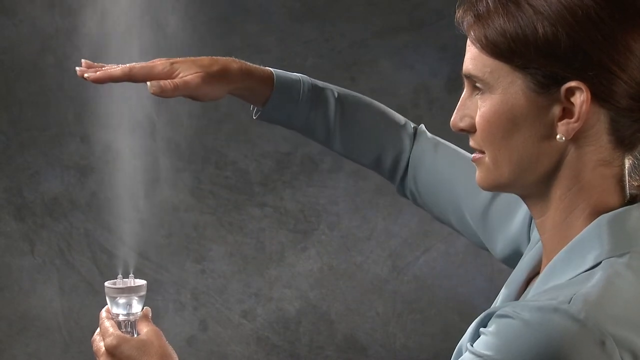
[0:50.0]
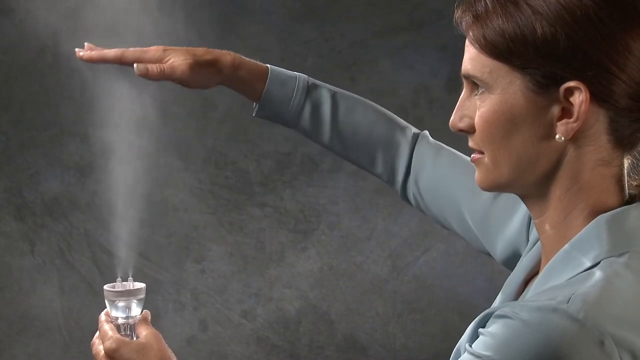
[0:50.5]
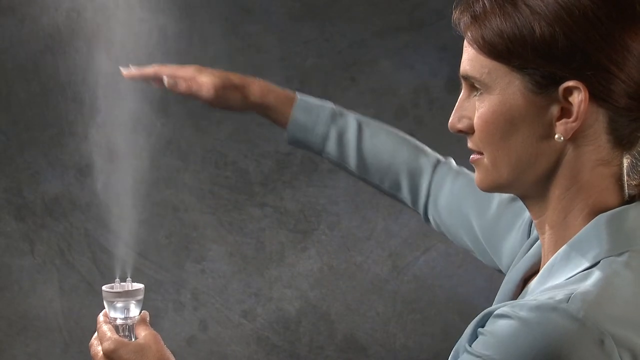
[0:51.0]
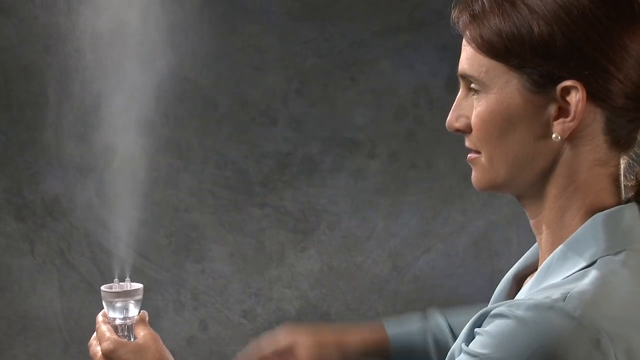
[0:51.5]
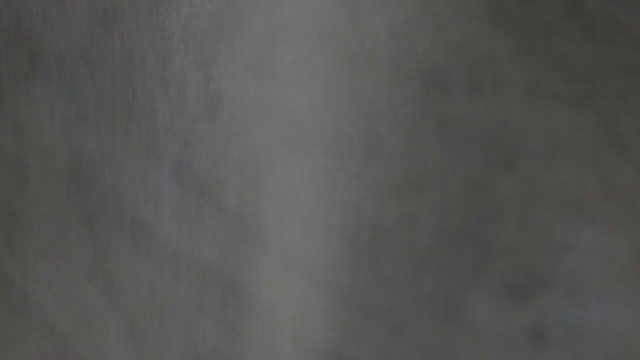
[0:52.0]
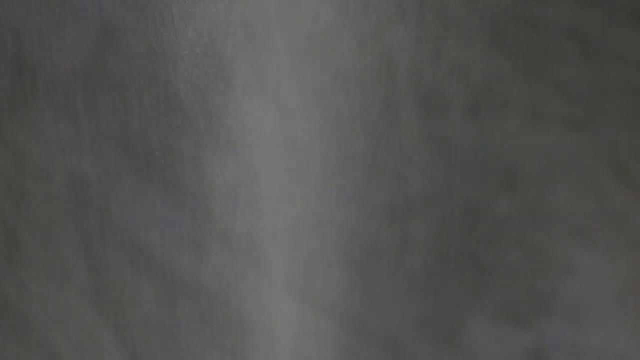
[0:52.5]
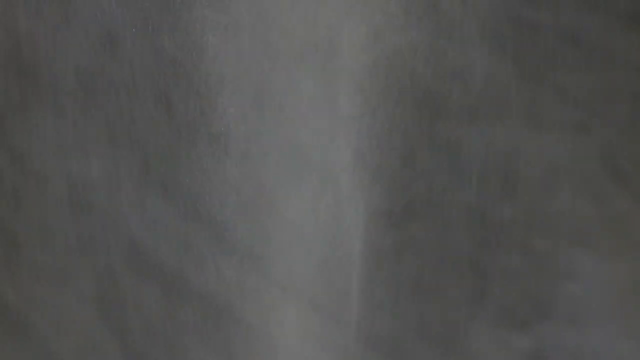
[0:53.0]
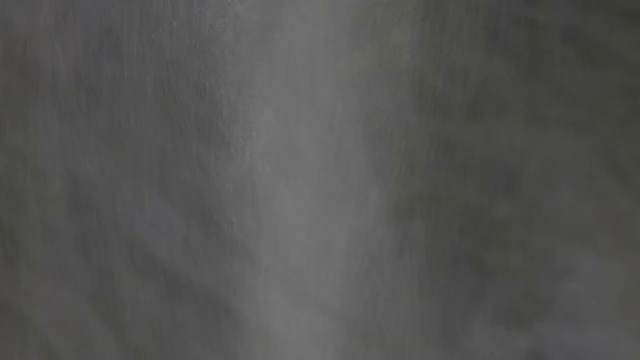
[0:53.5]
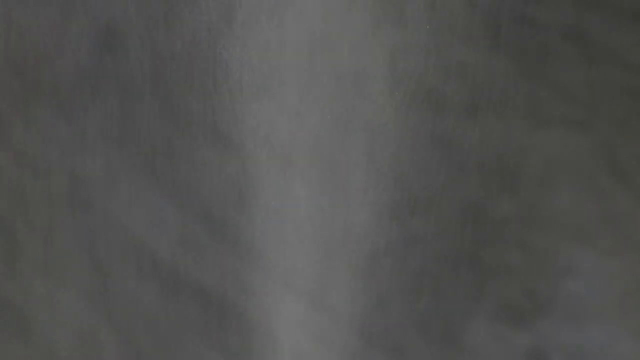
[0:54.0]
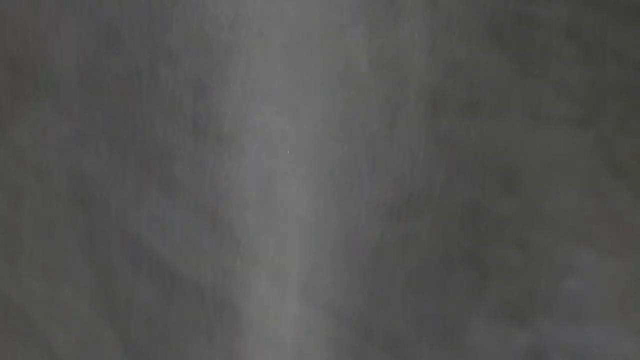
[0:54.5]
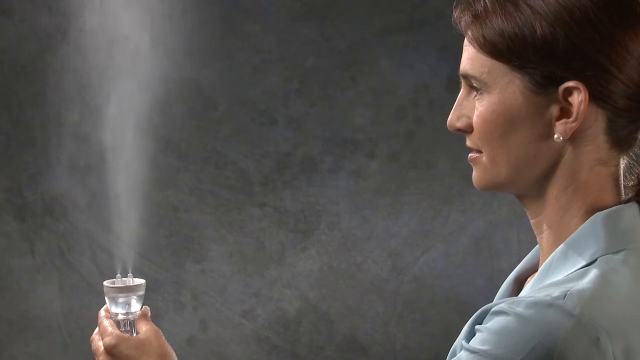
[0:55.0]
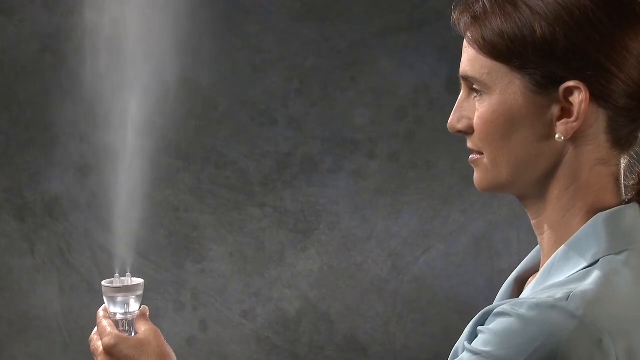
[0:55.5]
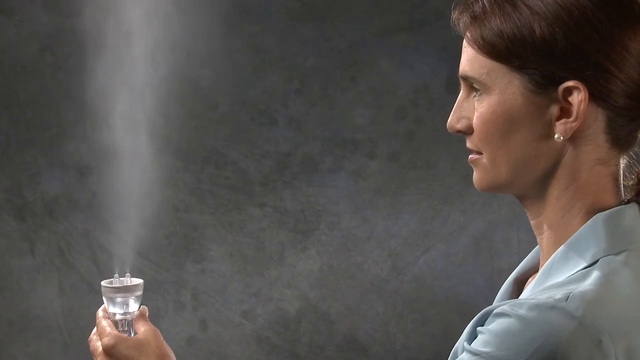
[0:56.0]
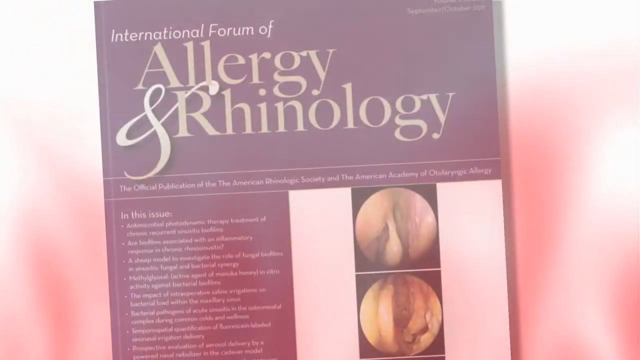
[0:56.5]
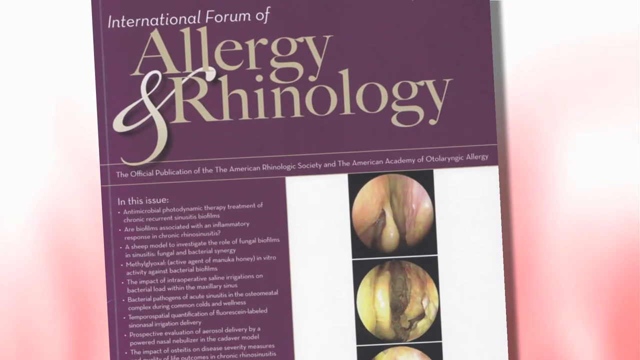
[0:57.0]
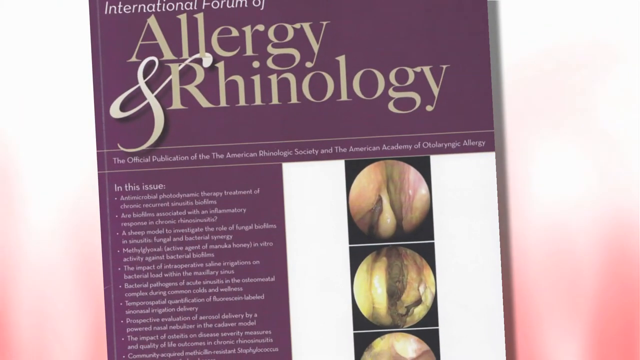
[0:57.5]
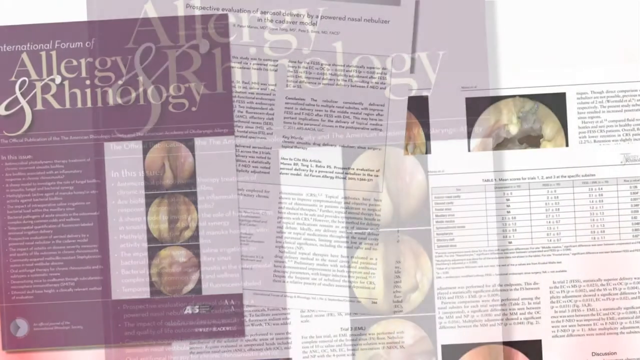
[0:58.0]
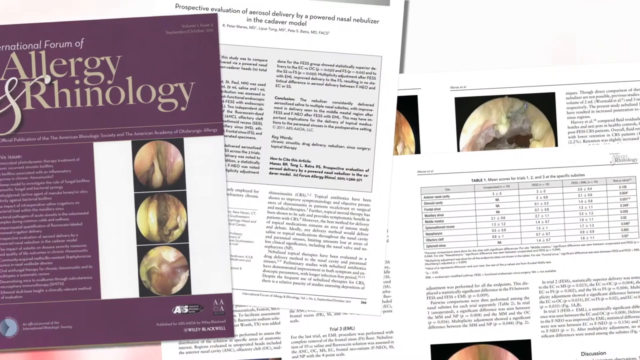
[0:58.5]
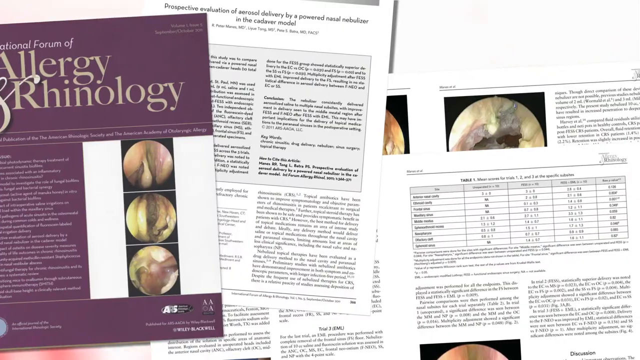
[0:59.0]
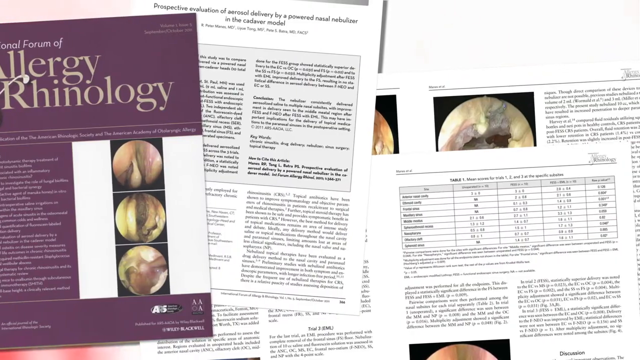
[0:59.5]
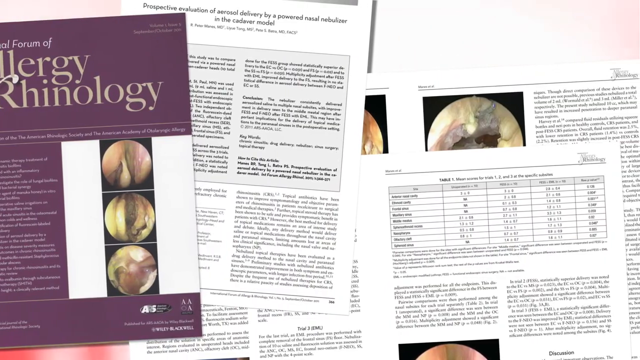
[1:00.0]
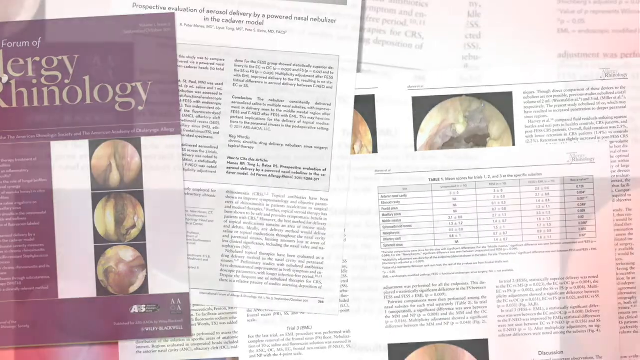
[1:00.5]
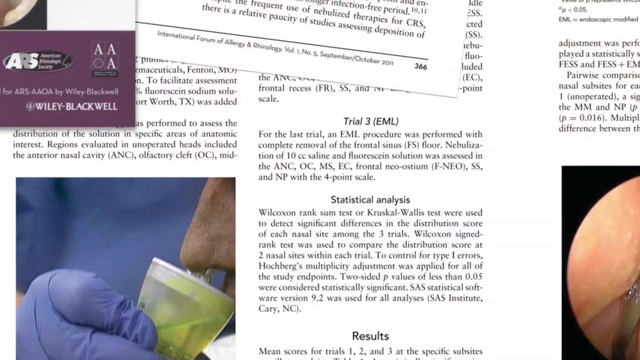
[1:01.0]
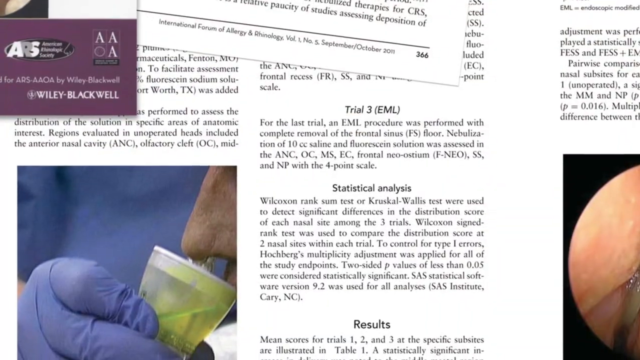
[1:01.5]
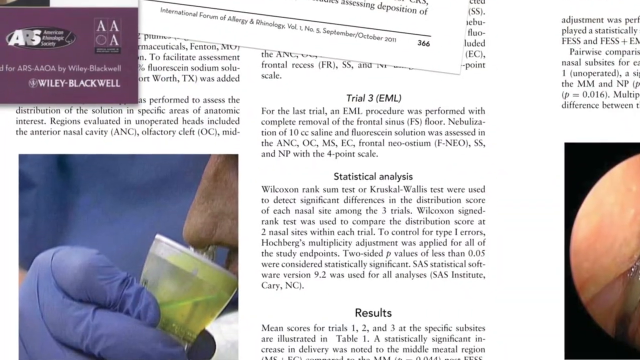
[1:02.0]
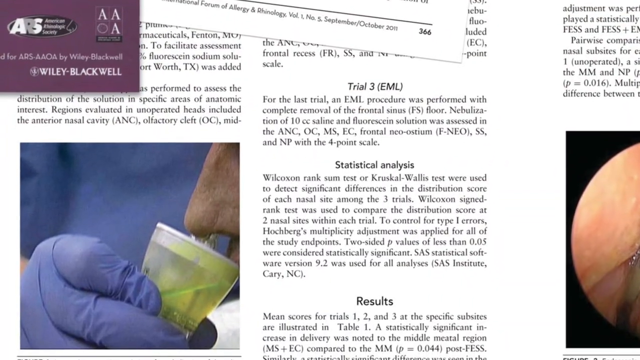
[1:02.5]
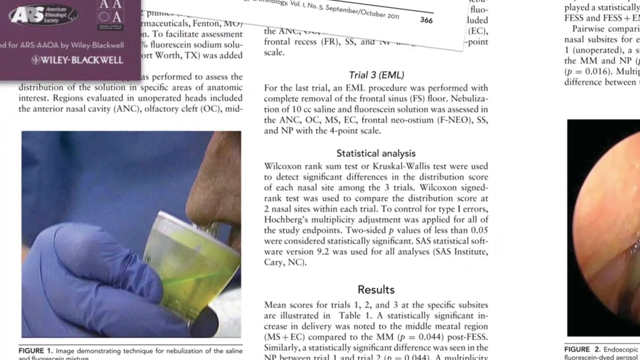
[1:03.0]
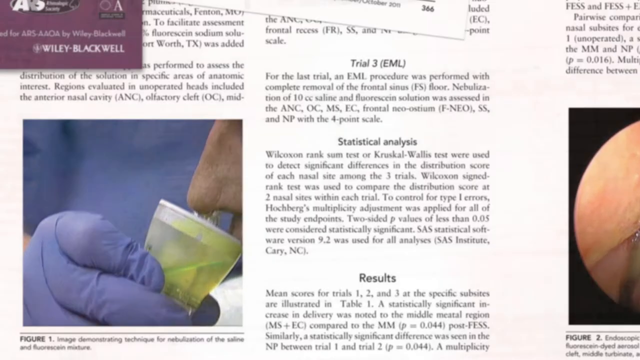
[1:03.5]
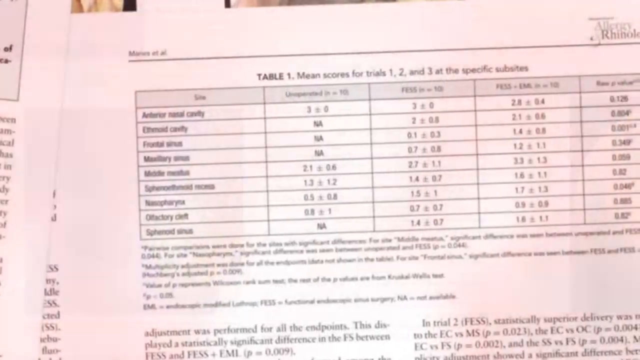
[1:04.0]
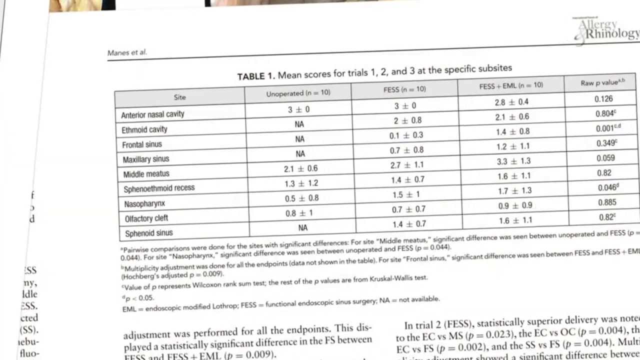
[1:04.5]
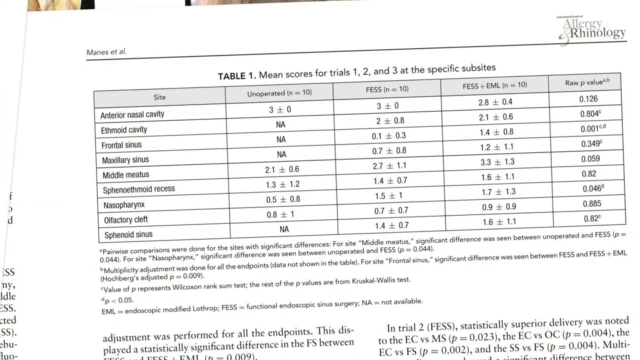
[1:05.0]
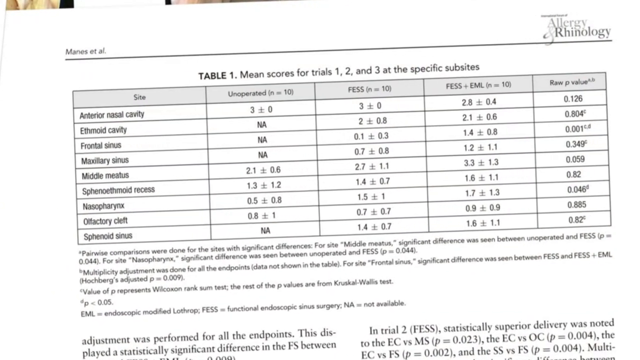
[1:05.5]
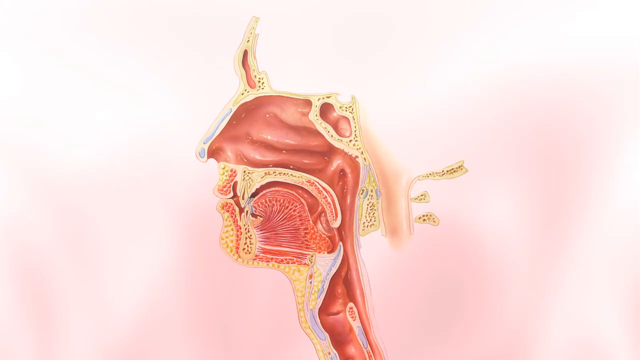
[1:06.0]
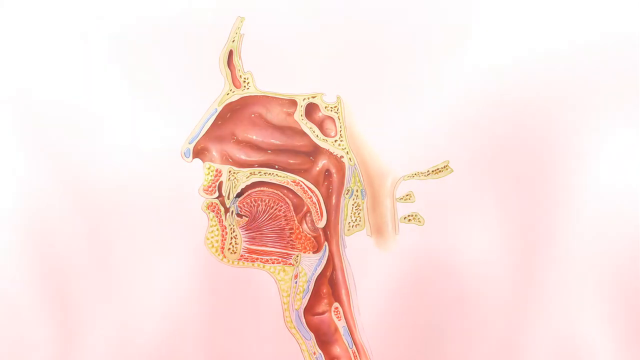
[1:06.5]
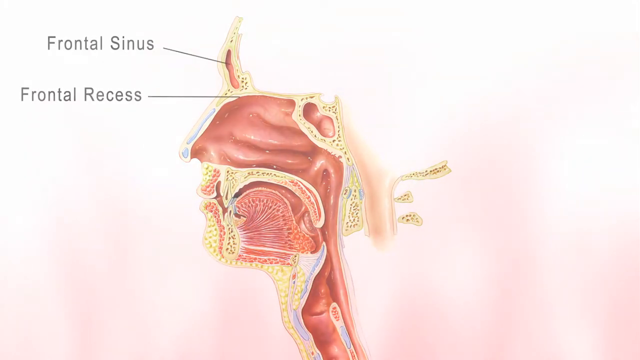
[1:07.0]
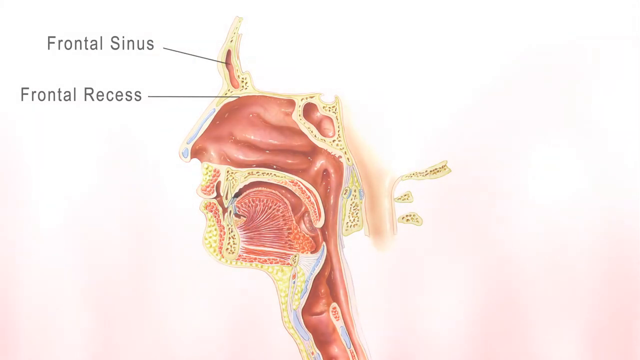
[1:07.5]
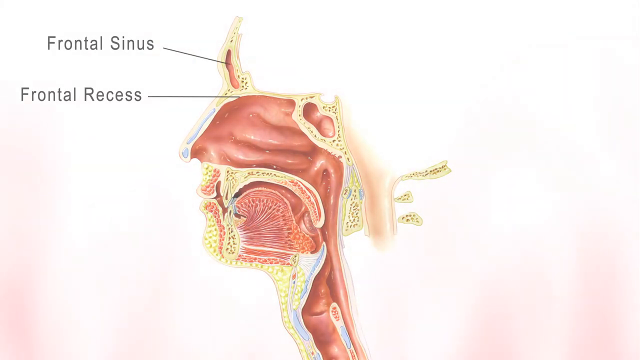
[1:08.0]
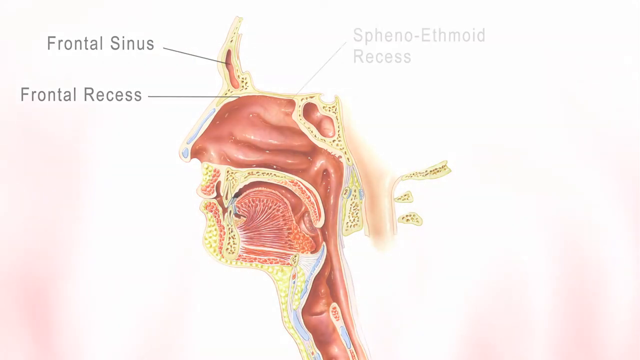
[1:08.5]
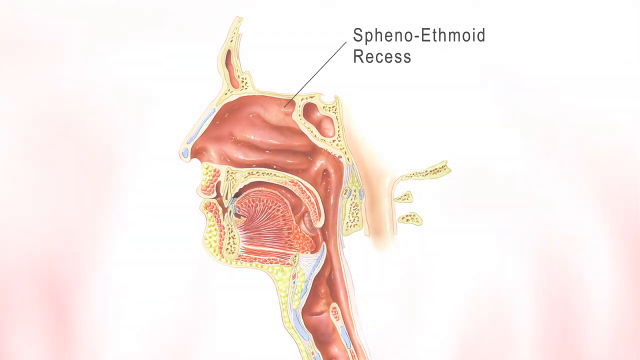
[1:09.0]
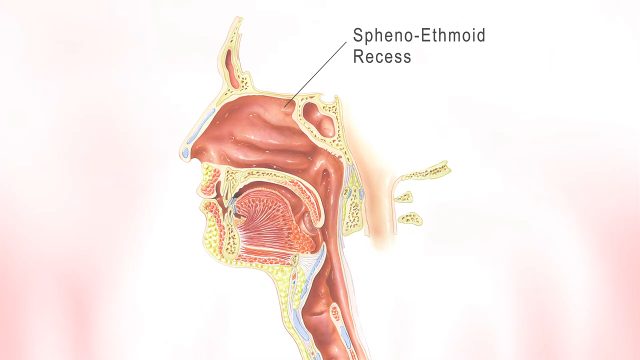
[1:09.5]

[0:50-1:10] The nozzle piece of the nebulizer machine sprays the air or mist coming out of the machine. The nozzle piece has water inside it, and steam is seen coming out of the water. A book reading "International Forum of Allergy and Rhinology" is shown, with pictures of allergies. Many pages with tables and descriptions appear, but the text is blurred. An annotated, colored cross-section of a human head shows the frontal sinus, frontal recess and spheno-ethmoid recess, along with the nasal passages, the nose, nostril and windpipe. While flipping through the book, a table also appears that could be statistics about nasal allergy.